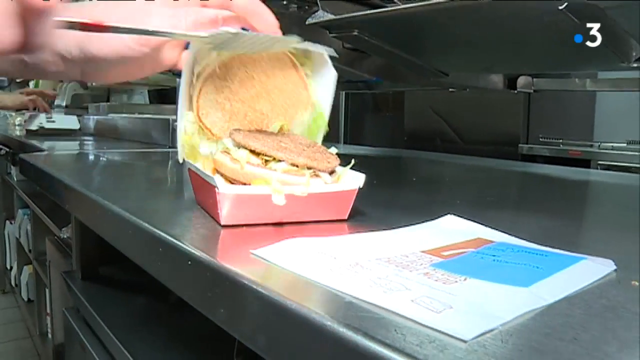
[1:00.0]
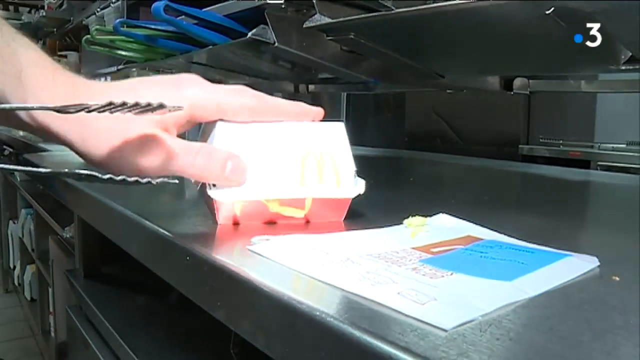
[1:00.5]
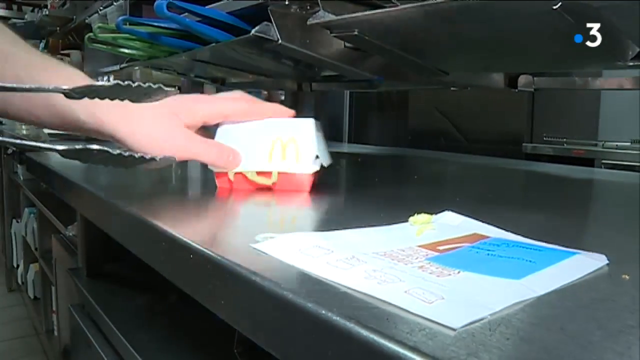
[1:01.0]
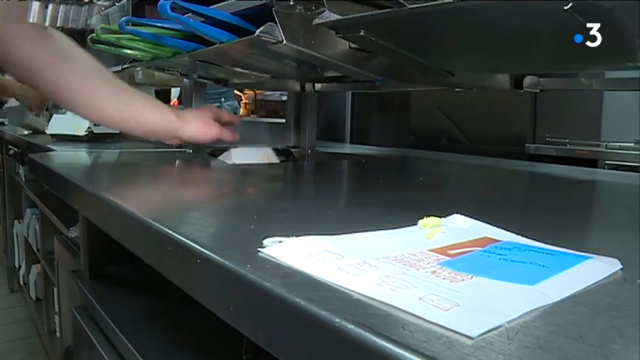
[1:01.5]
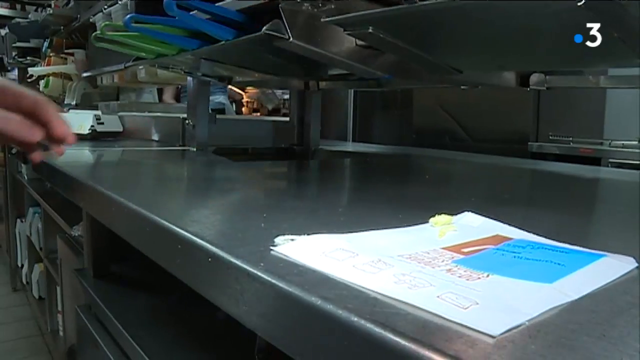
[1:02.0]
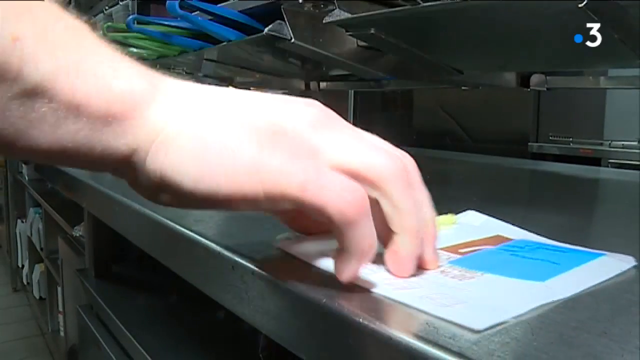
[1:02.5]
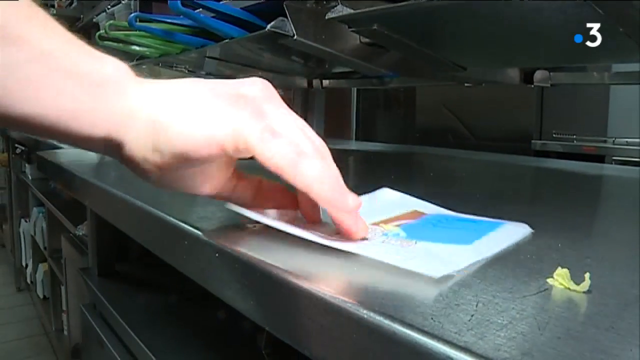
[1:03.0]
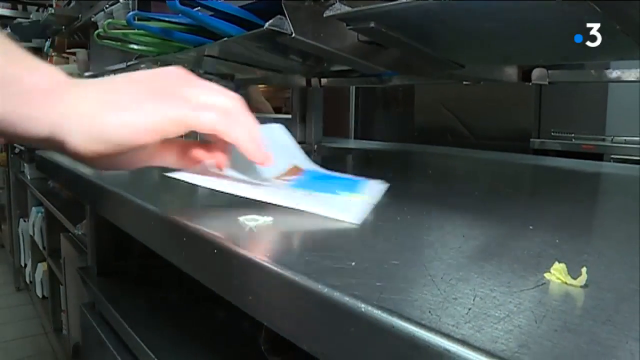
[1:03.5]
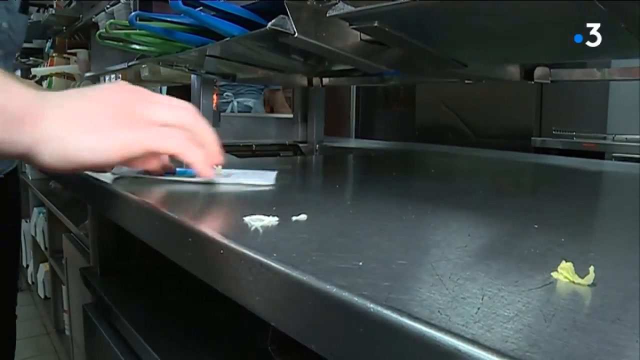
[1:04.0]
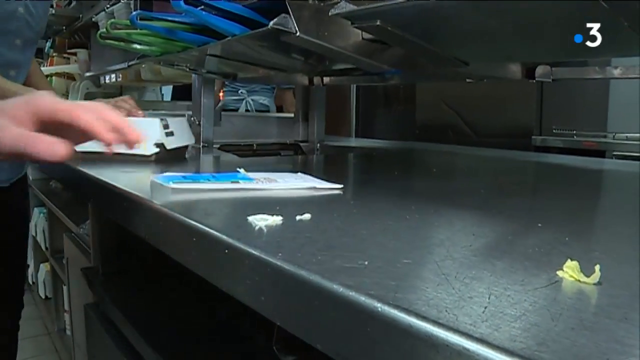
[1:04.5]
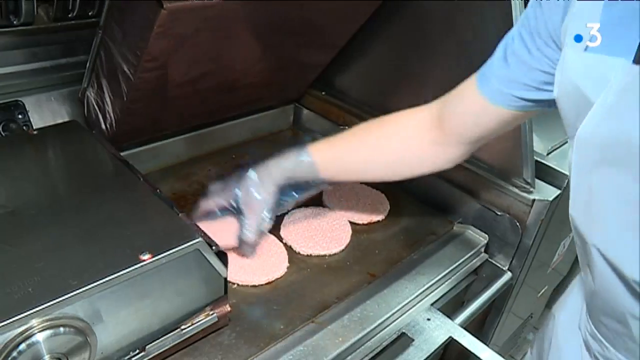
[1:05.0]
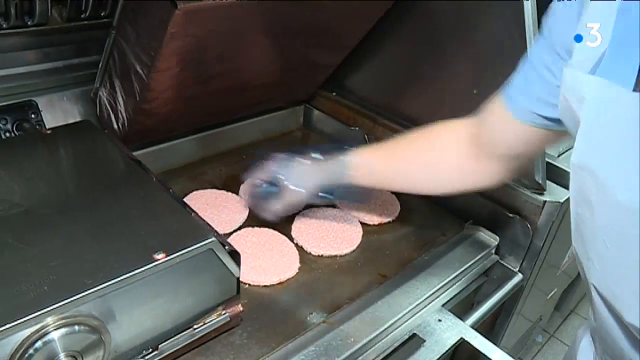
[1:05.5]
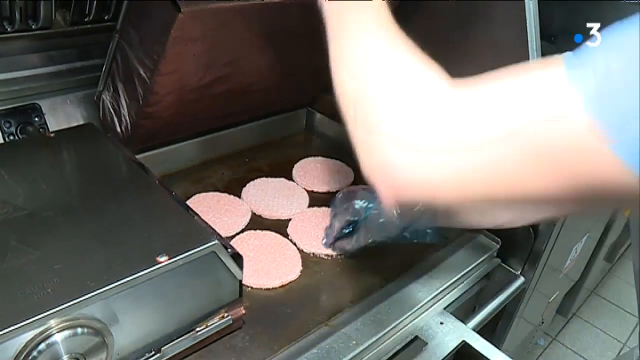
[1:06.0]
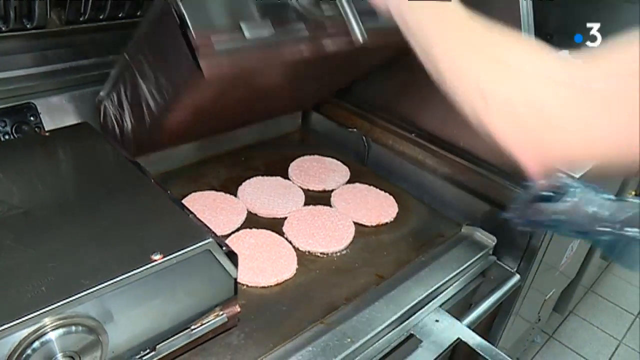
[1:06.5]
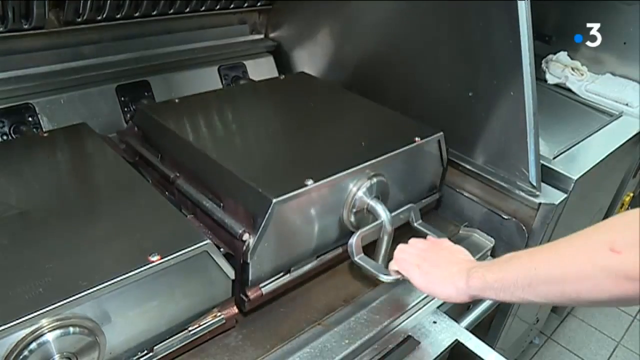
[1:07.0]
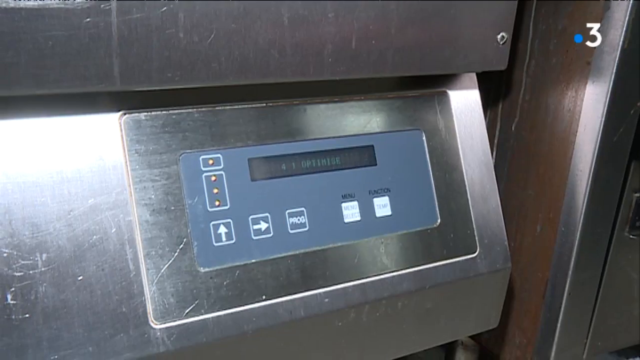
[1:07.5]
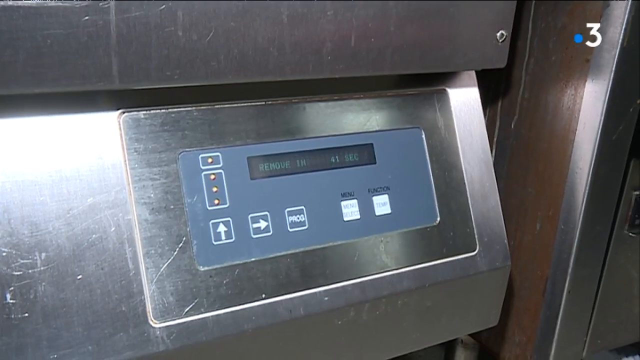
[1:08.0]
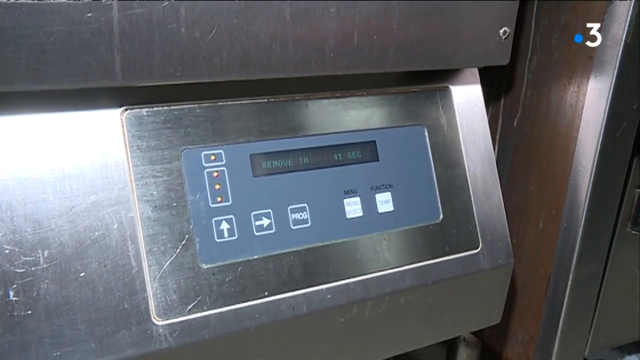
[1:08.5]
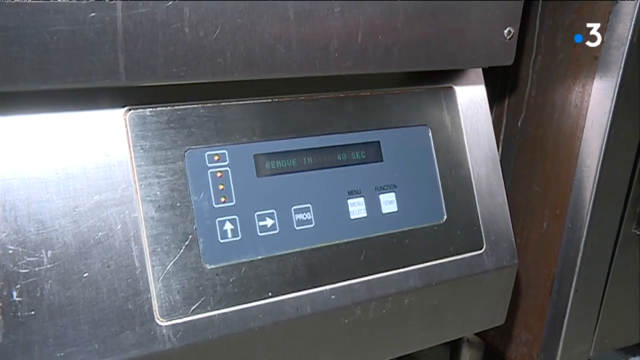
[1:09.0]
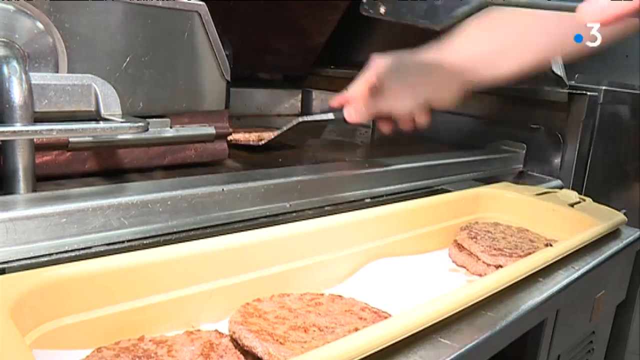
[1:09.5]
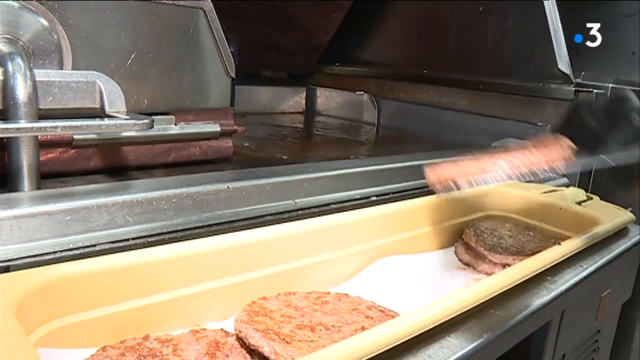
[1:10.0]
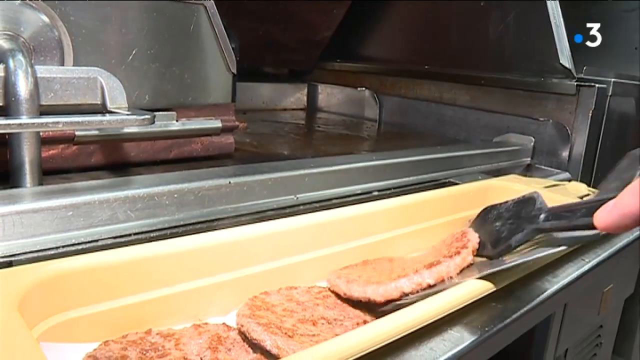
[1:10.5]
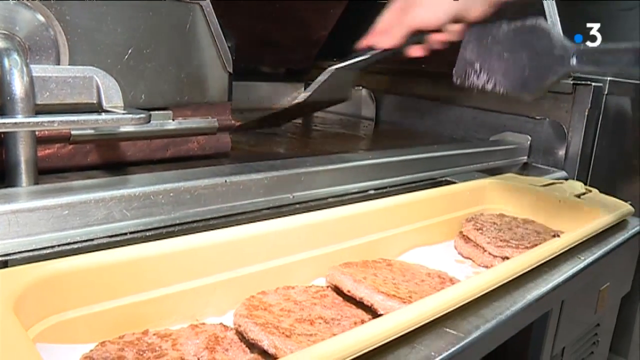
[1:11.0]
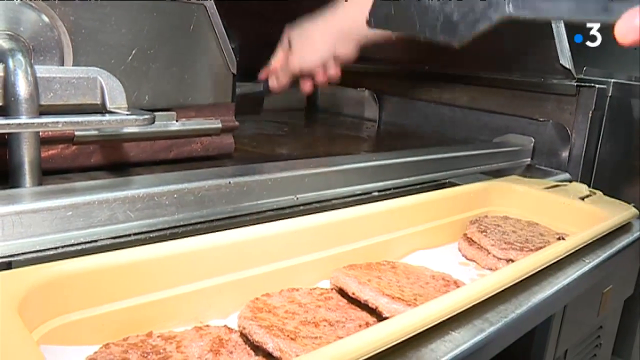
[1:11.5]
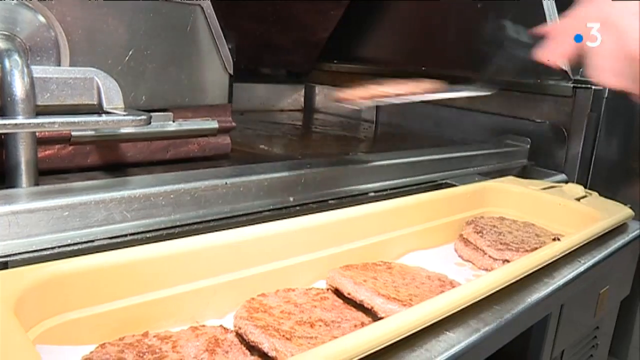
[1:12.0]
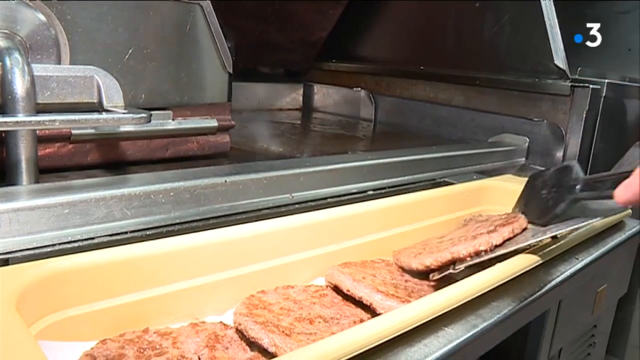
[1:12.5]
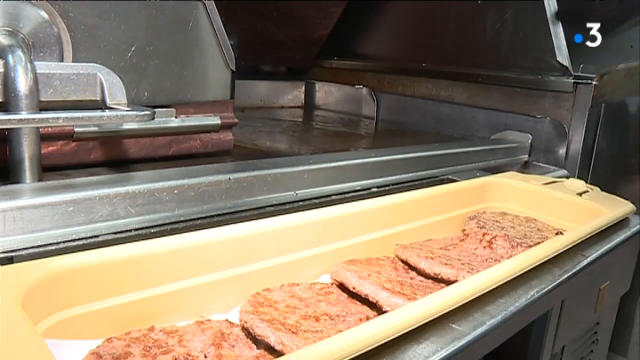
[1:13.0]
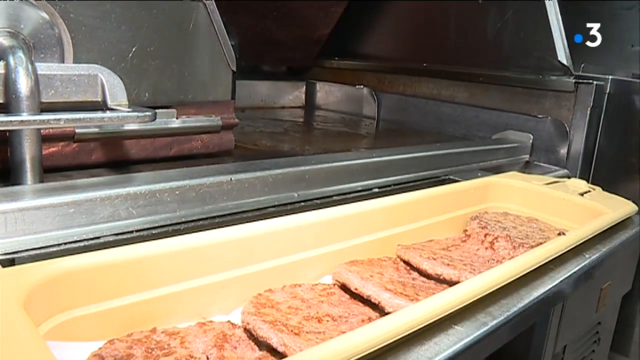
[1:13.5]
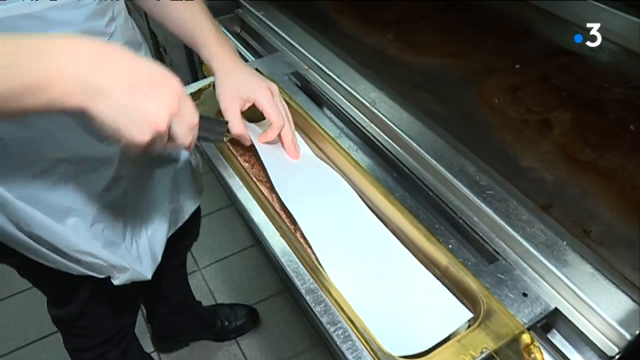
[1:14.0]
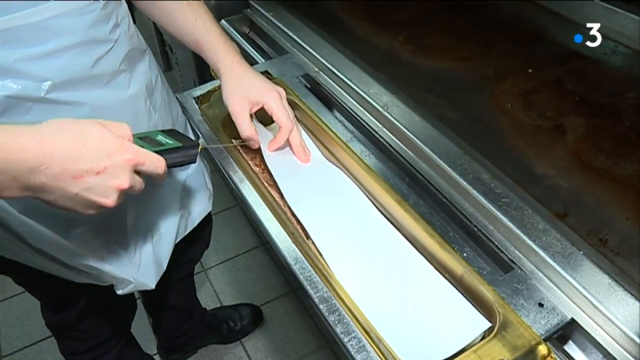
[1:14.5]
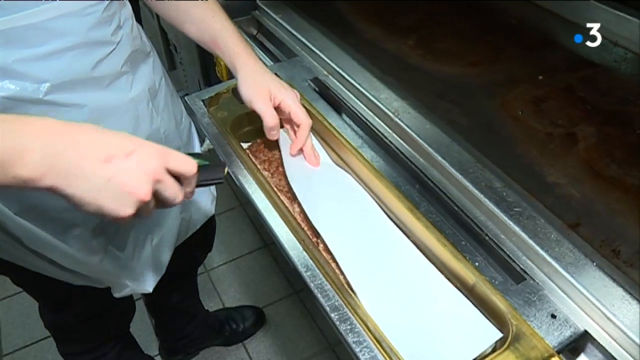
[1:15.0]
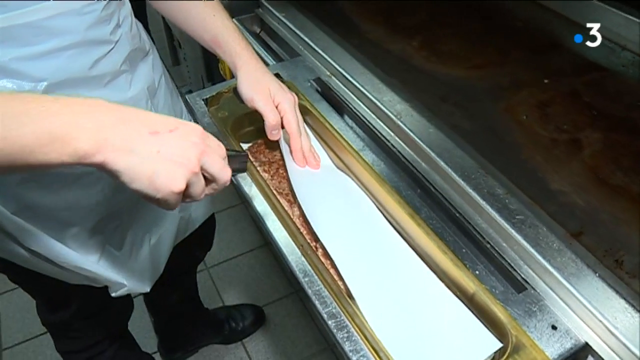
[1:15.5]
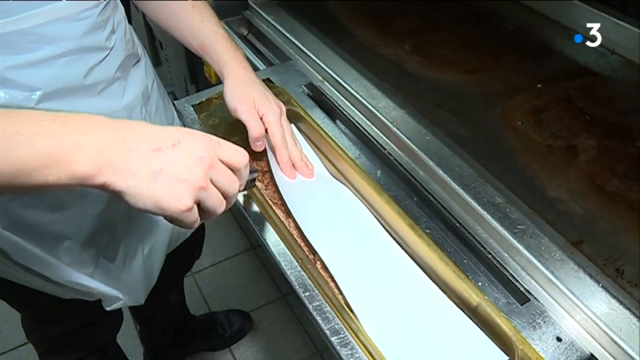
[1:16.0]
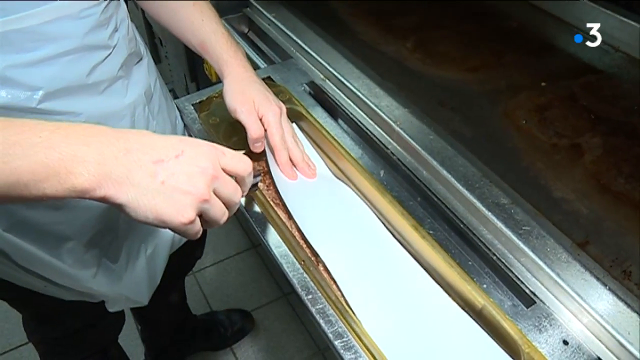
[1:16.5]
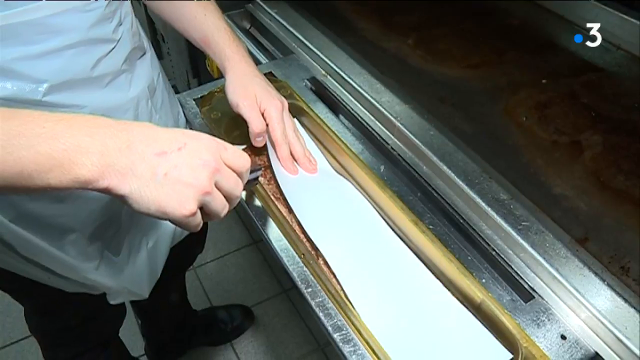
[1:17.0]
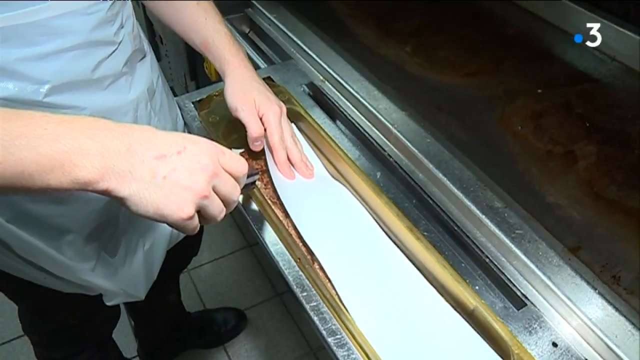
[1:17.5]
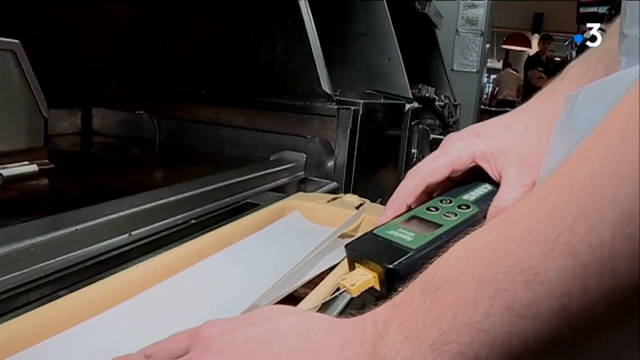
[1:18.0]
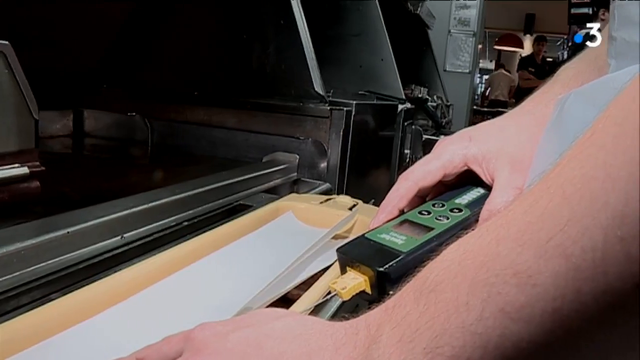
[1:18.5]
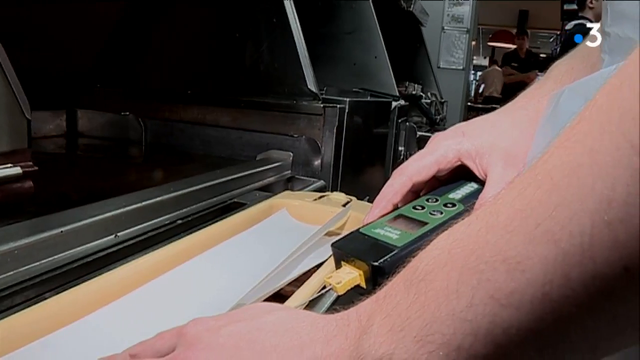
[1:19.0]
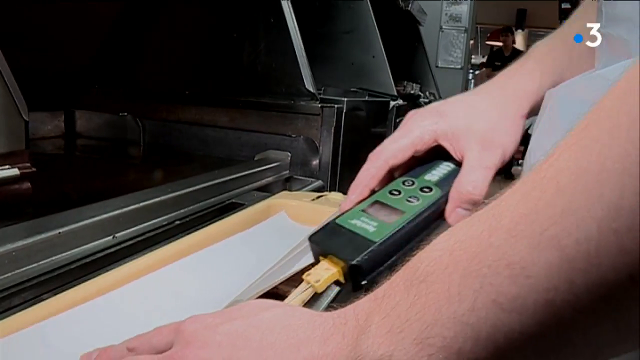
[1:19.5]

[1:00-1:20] A close-up of a kitchen counter in a McDonald's restaurant shows someone's hand reaching for what looks like a McDonald's wrapper or napkin. Next, someone wearing gloves places meat patties on a griddle; there are six patties on the grill, and the person reaches above them looking for other items. A close-up shows the controls of one of the kitchen appliances, with a timer that says "remove in forty seconds". A person then takes the patties off the grill with a large metal spatula and places them all into a long yellow tray on top of the kitchen counter. Someone covers them with a white piece of what looks like kitchen paper and reaches under the paper to check the temperature of the patties. The shot ends on a close-up of the thermometer being used.